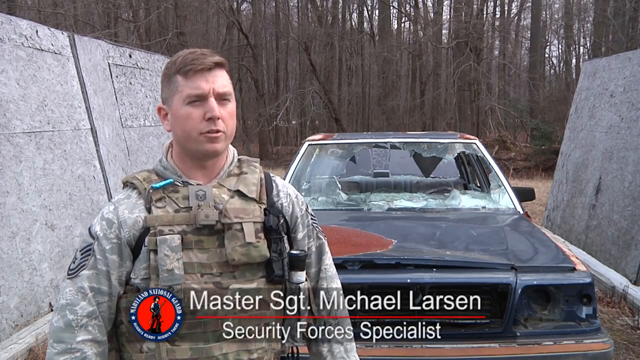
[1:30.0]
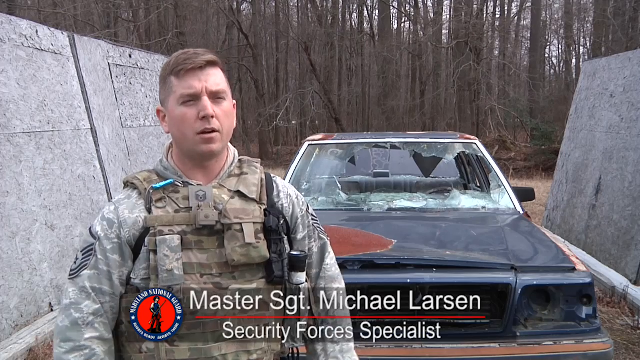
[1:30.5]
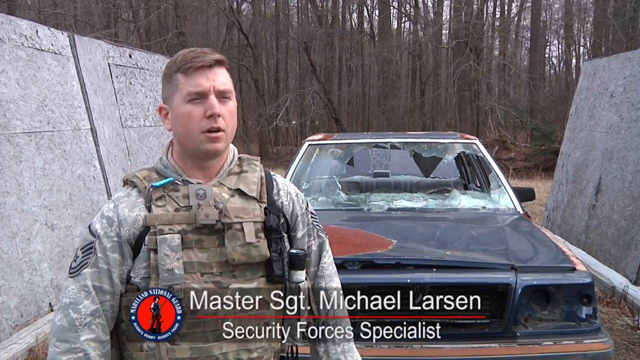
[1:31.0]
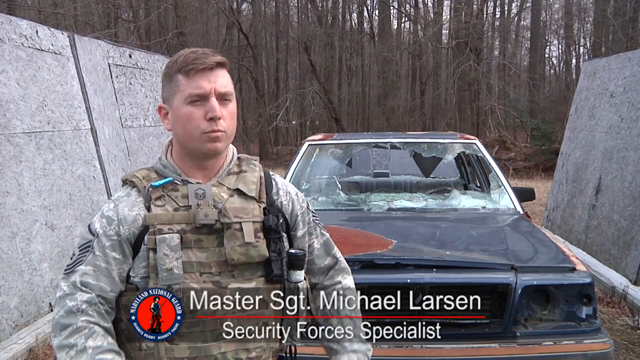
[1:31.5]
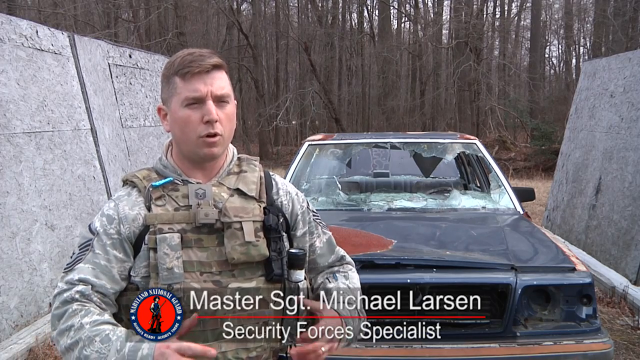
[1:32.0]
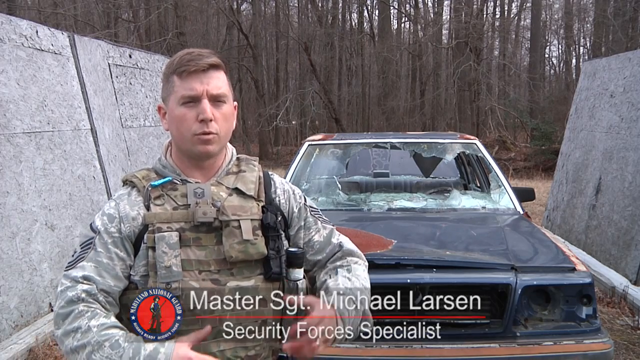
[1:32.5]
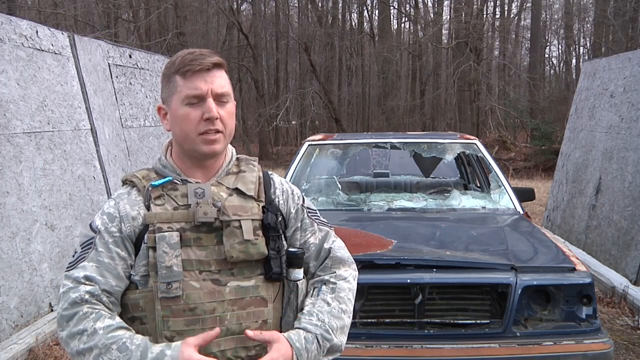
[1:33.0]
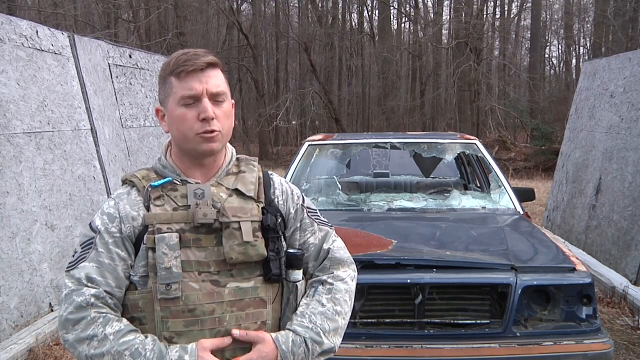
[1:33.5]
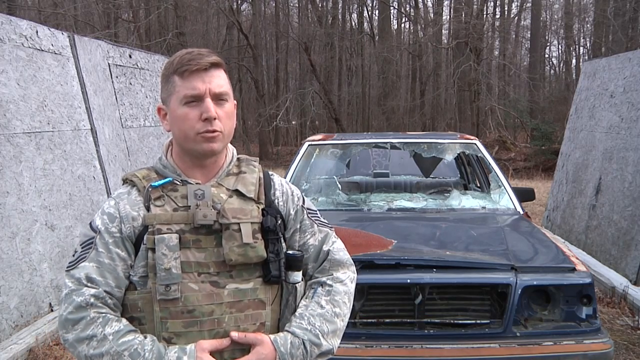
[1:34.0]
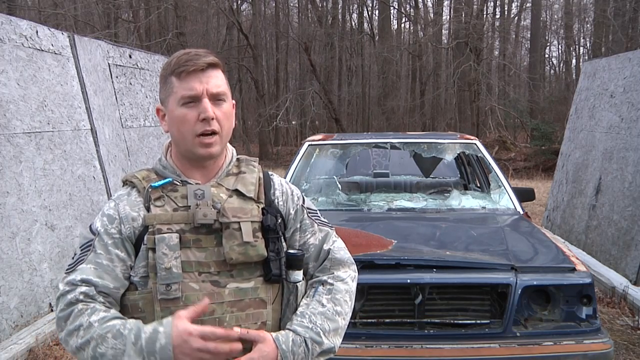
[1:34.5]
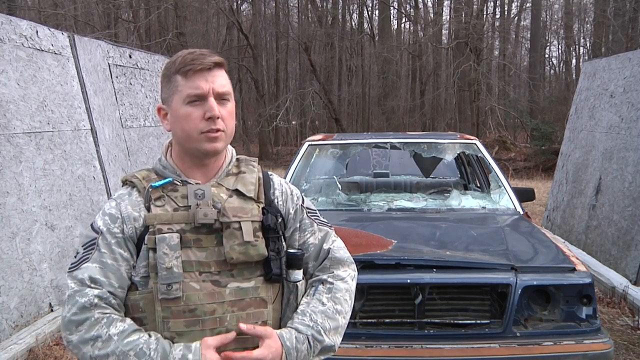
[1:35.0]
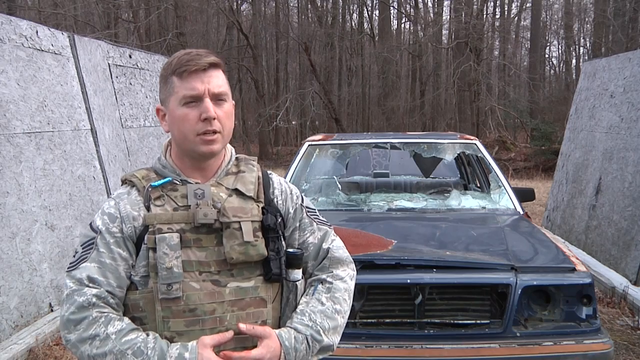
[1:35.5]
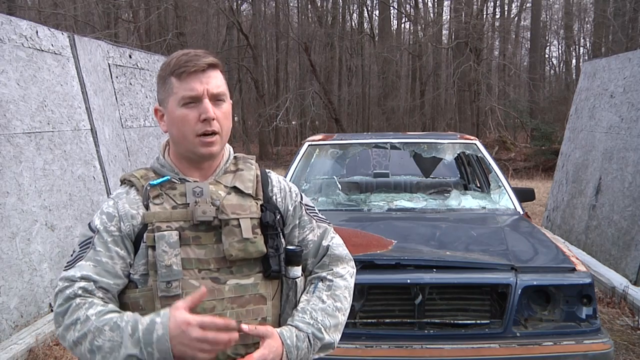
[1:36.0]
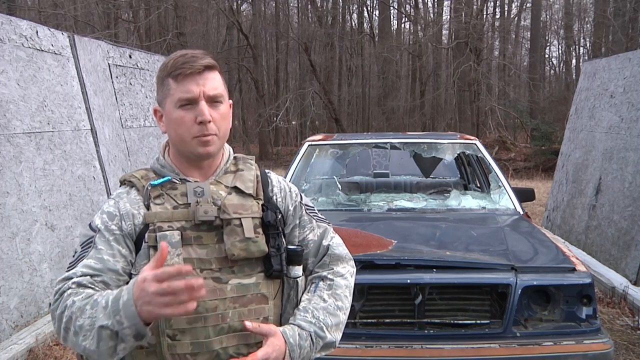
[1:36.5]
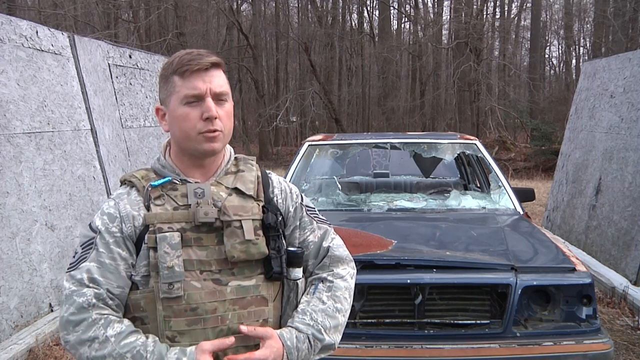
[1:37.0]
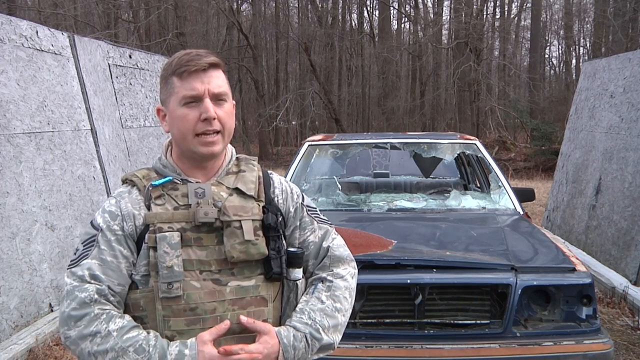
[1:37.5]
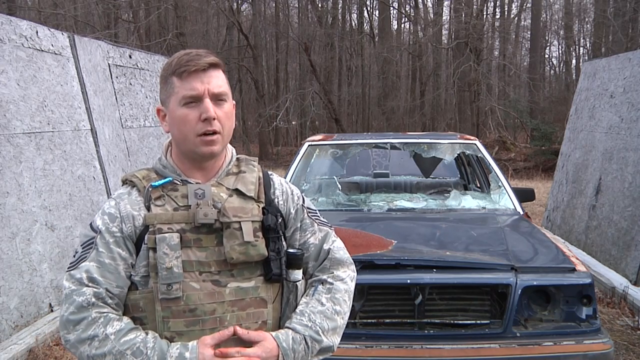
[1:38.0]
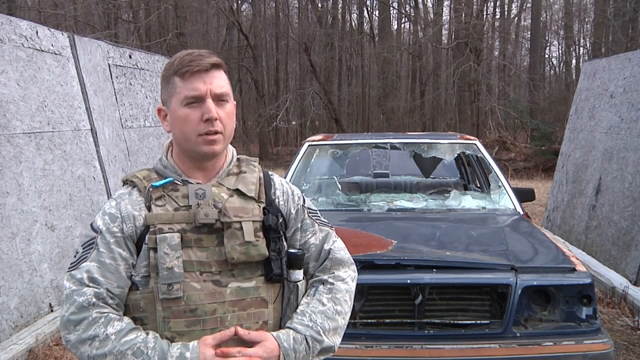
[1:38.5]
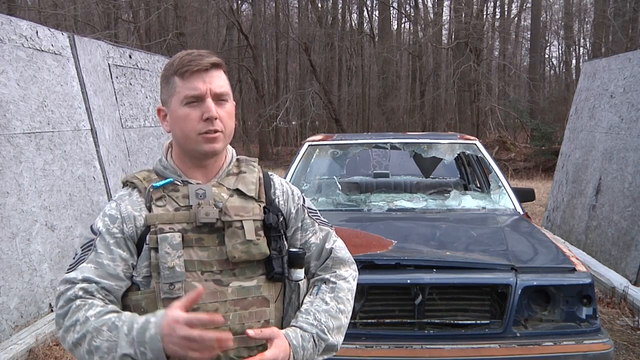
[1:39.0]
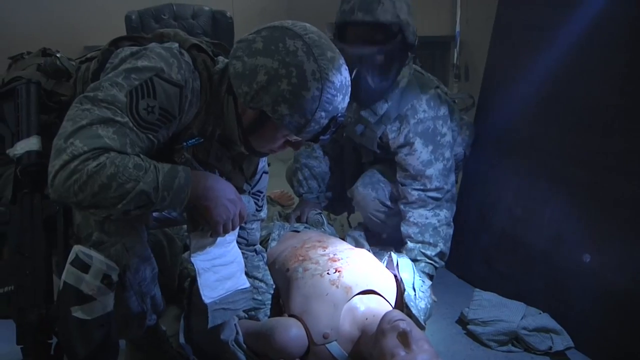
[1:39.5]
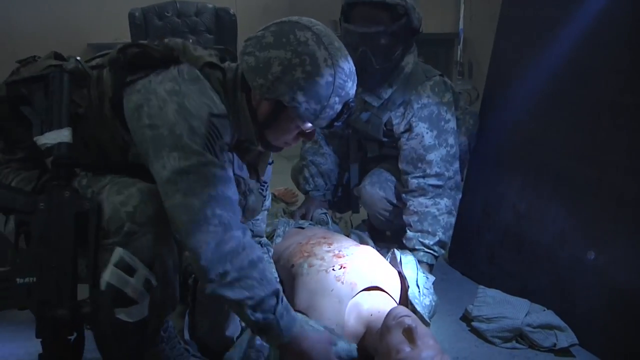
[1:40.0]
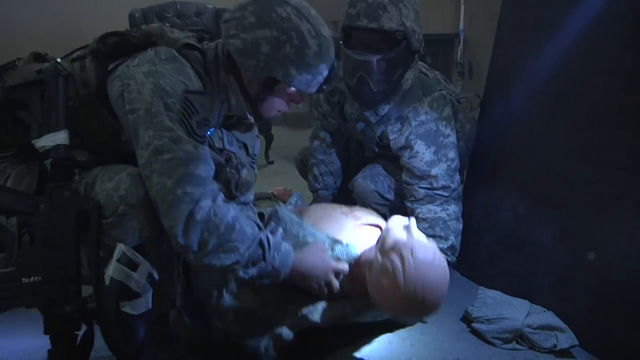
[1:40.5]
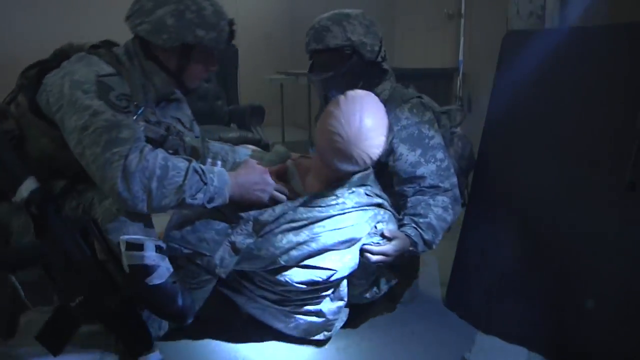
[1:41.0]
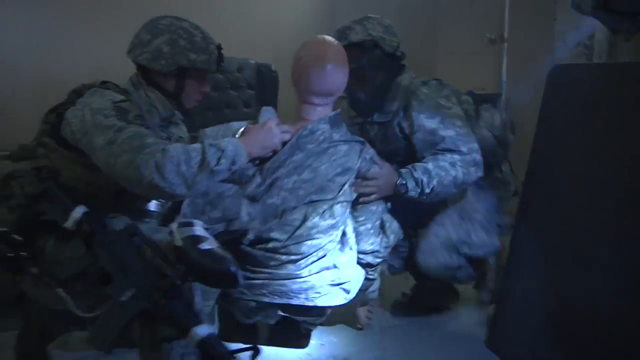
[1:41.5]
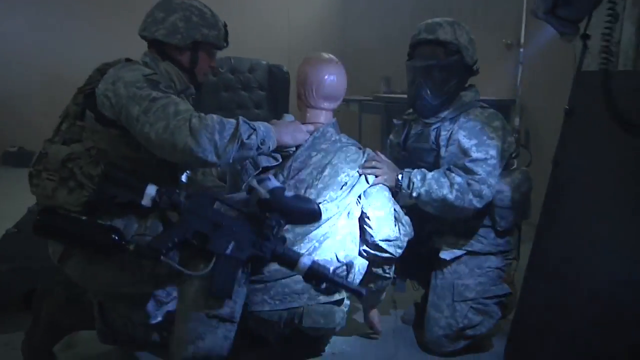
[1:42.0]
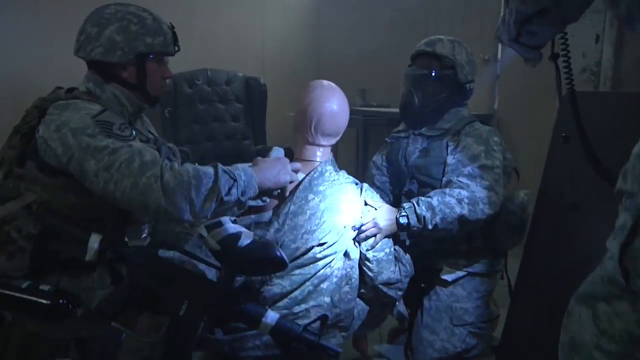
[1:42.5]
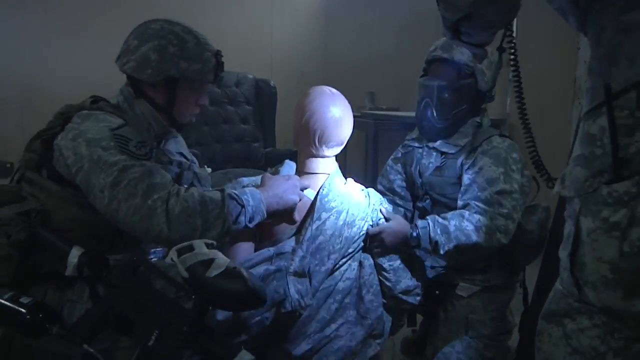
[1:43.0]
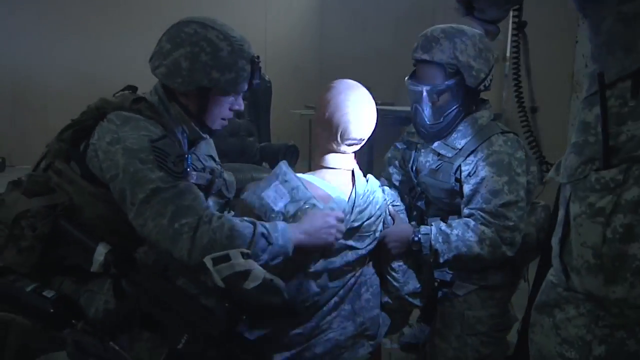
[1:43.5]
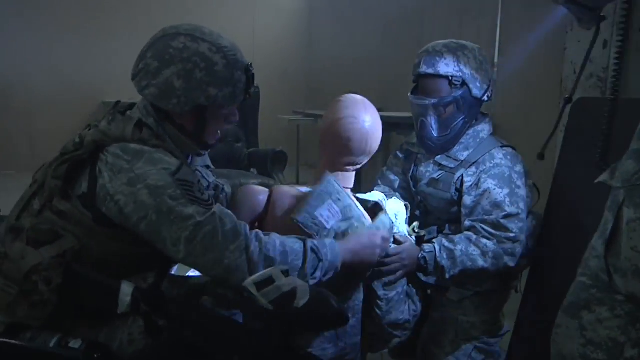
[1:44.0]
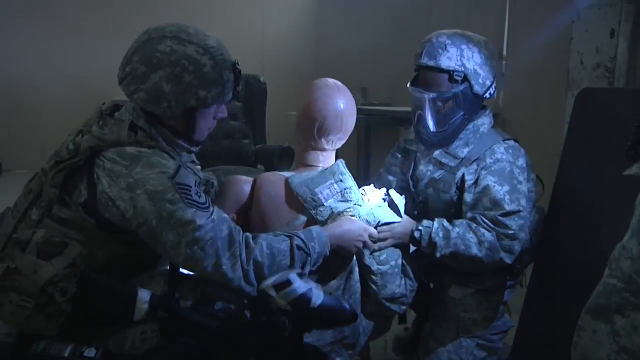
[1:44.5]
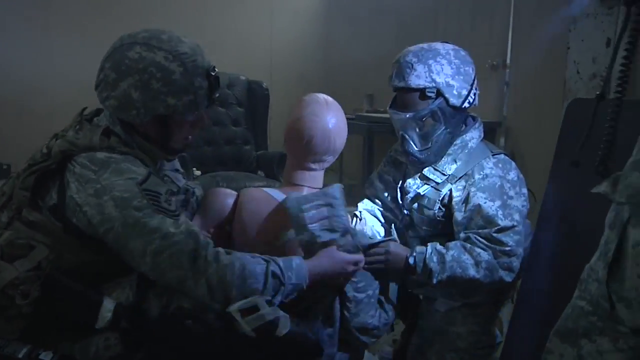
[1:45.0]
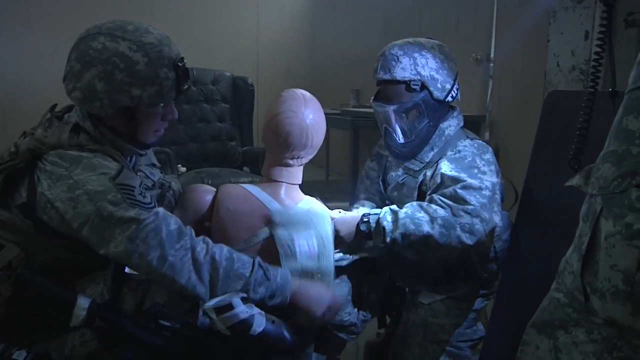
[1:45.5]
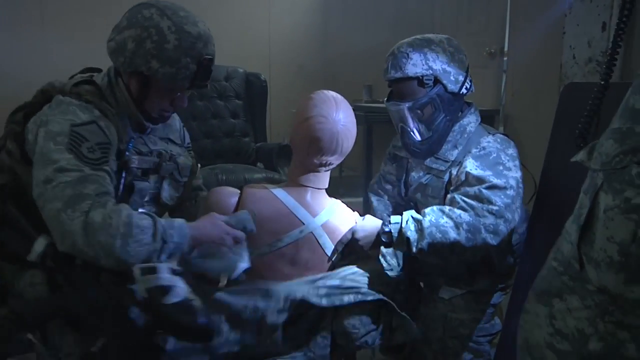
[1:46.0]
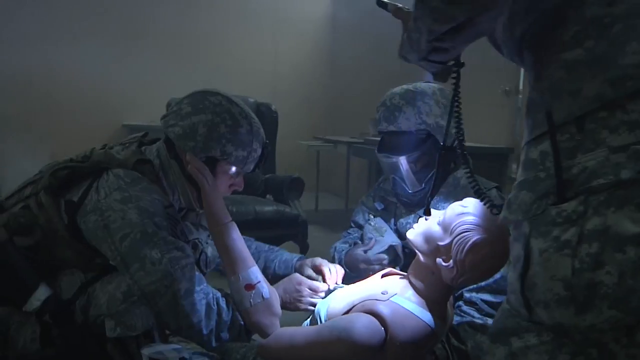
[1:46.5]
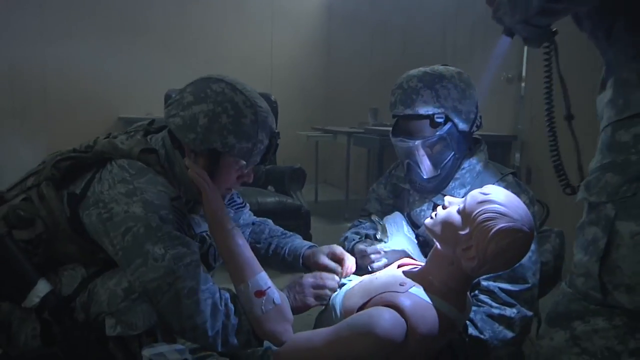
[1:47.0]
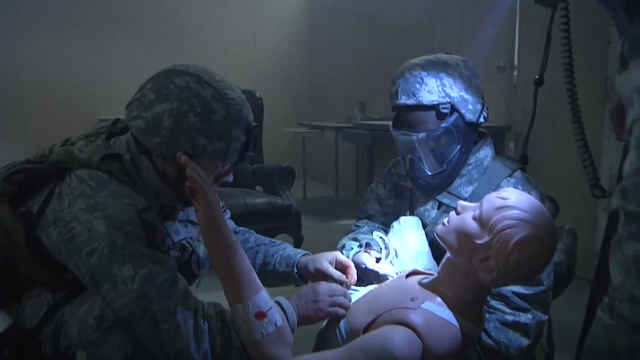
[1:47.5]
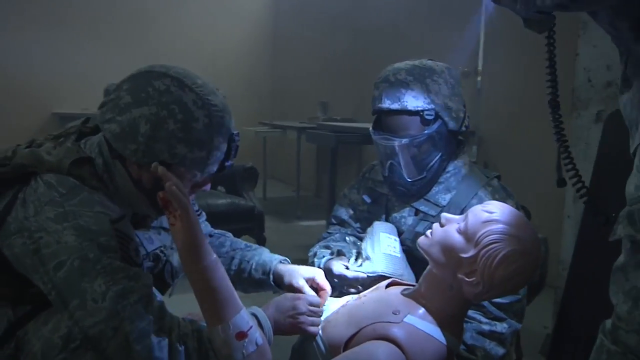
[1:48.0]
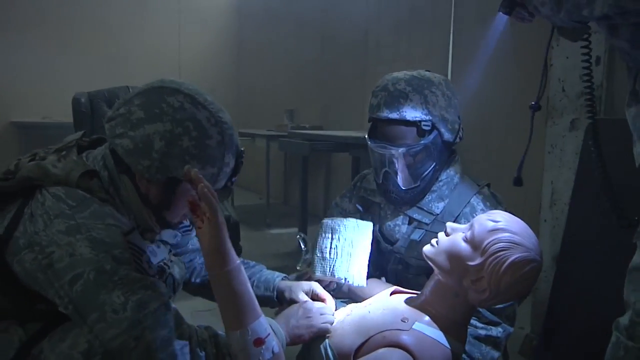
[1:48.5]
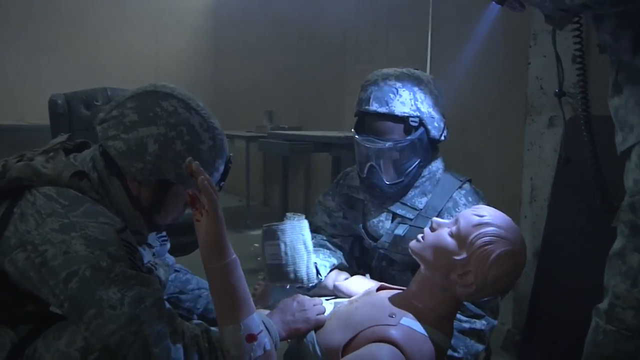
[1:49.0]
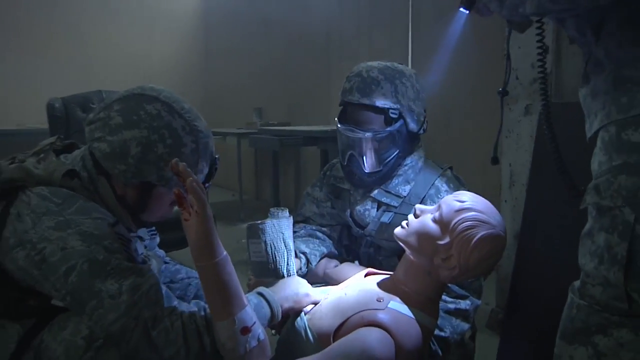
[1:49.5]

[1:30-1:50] A white middle-aged man appears, and on the screen there is a logo with his name next to it, written as "Master Stg Michael Larsen", a security forces specialist. He is wearing his soldier regalia and standing in front of a car that looks abandoned and has broken windows. The soldiers then continue training in assisting a wounded soldier. They lift him up from the floor where he is sleeping, remove his top completely and start removing the bandages on his body. About three soldiers are busy with this, while one soldier stands by holding a torch, providing light for the soldiers holding the wounded soldier.